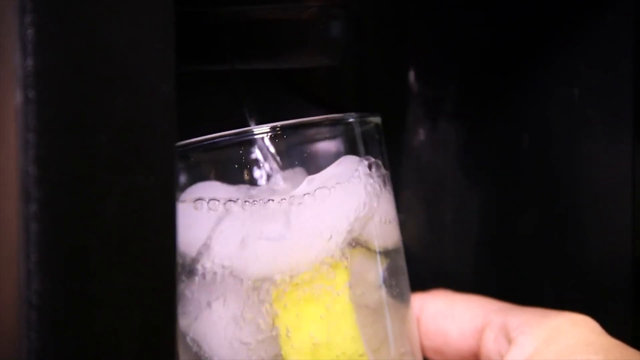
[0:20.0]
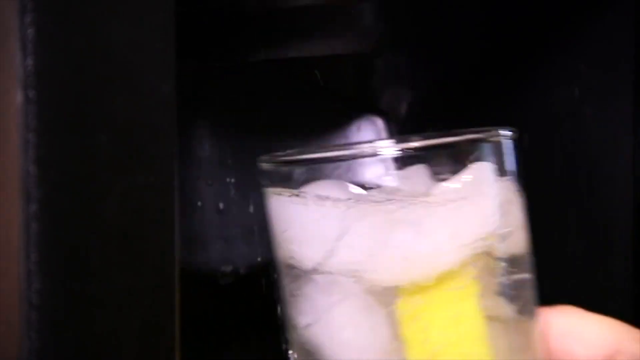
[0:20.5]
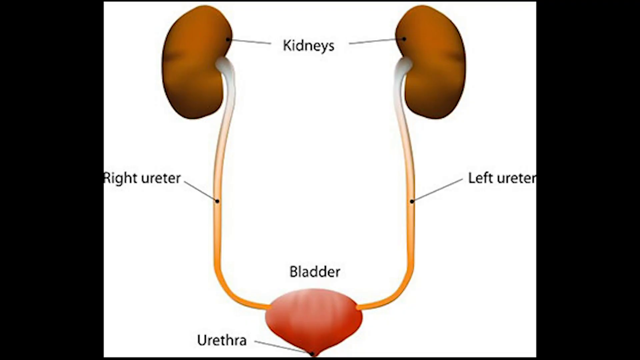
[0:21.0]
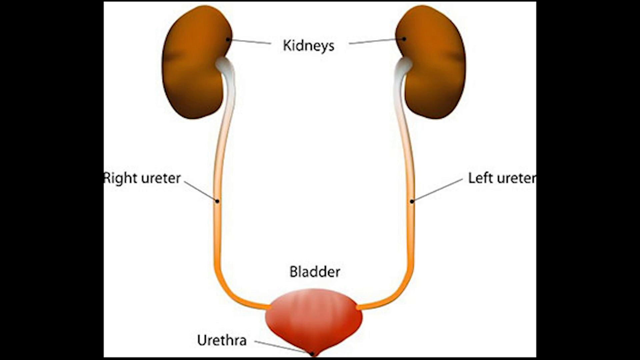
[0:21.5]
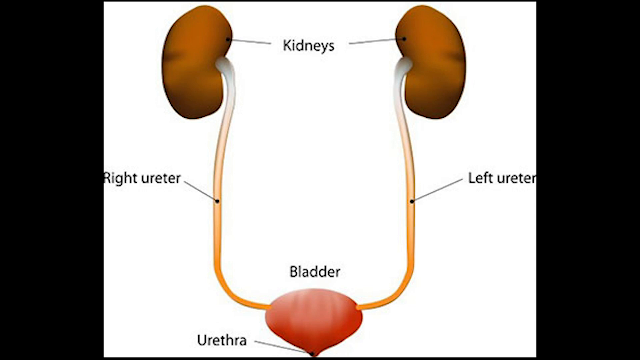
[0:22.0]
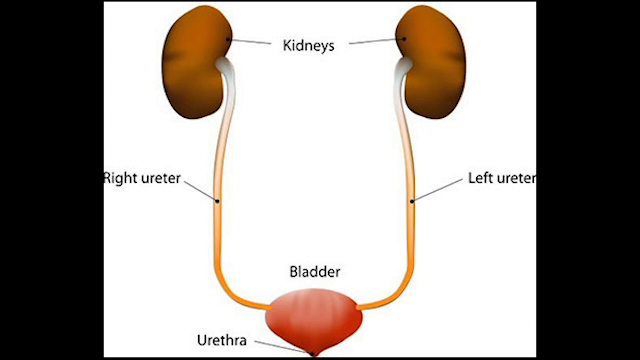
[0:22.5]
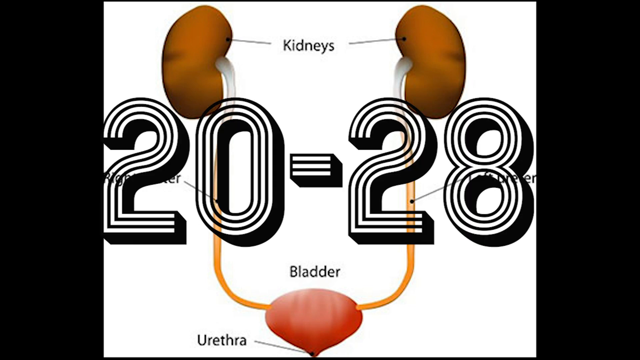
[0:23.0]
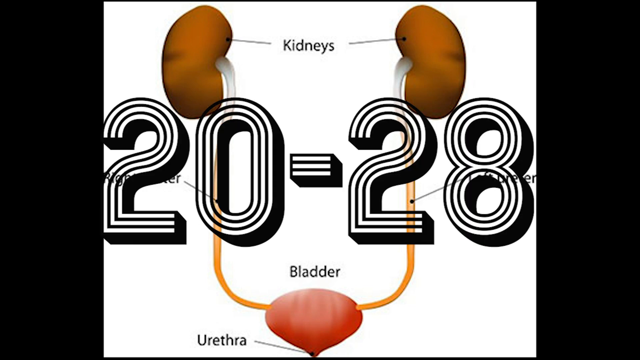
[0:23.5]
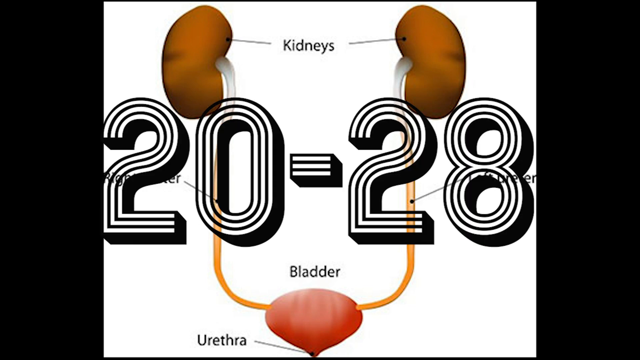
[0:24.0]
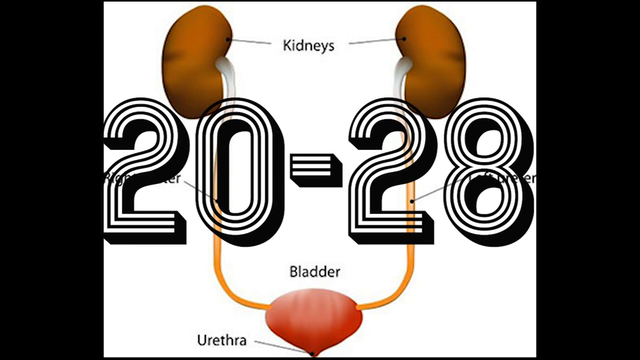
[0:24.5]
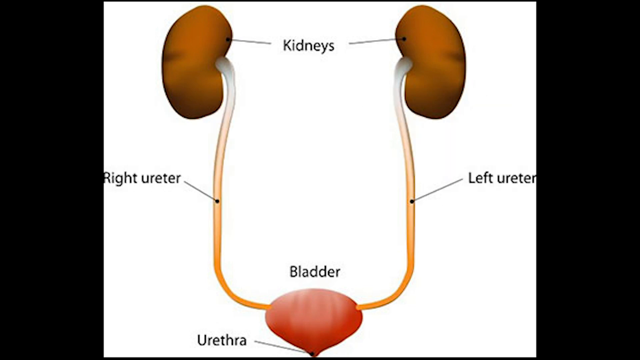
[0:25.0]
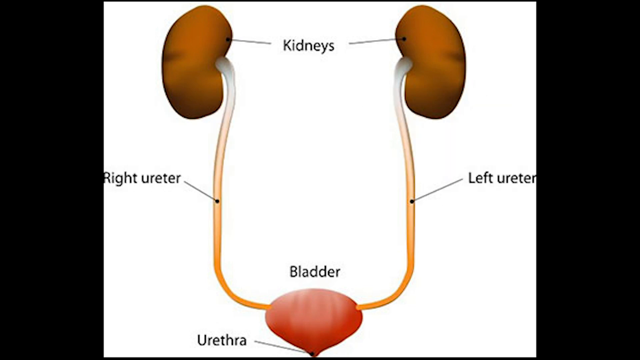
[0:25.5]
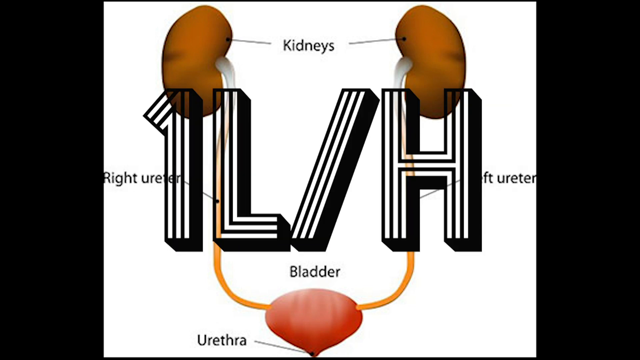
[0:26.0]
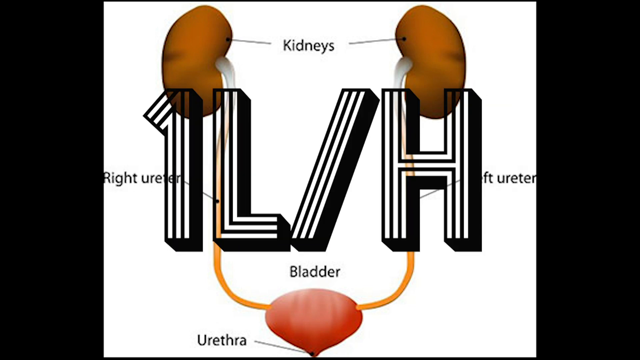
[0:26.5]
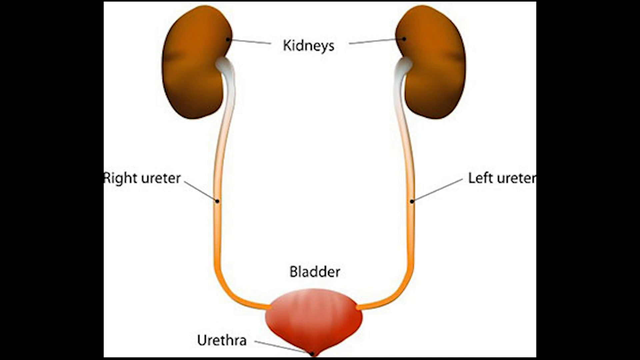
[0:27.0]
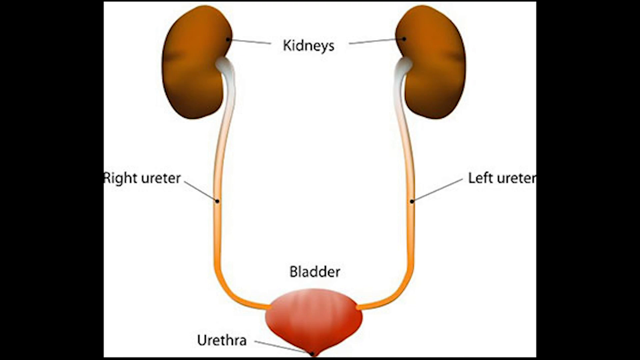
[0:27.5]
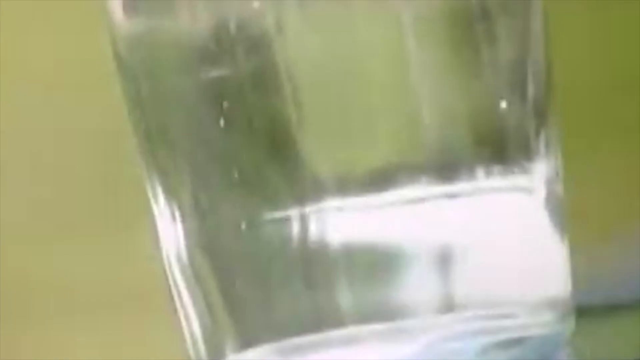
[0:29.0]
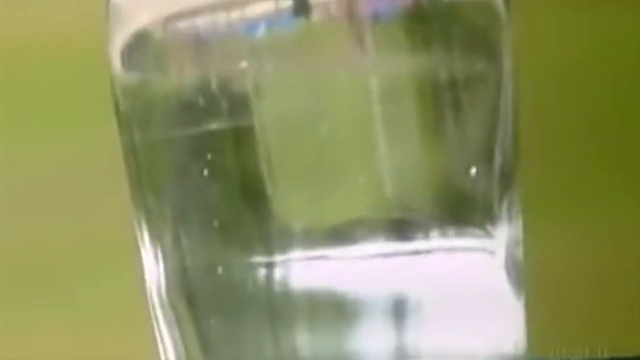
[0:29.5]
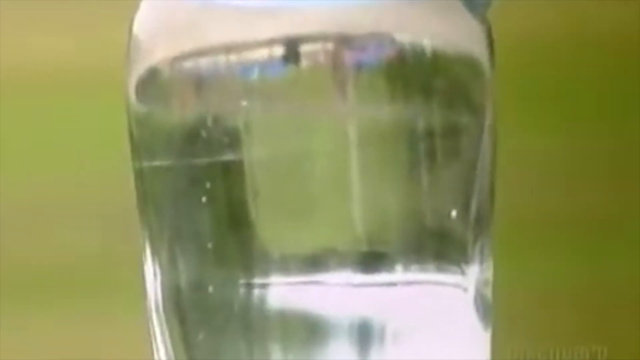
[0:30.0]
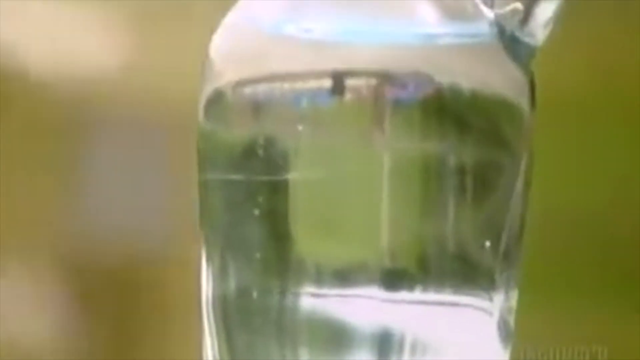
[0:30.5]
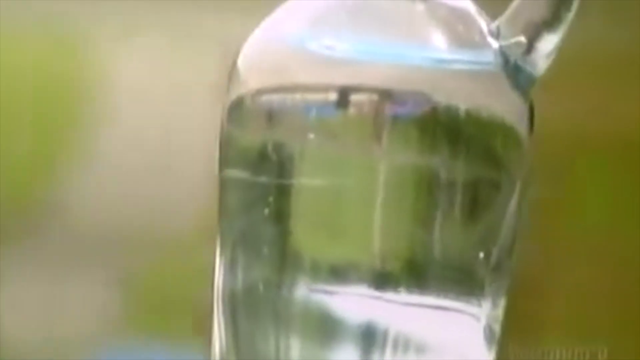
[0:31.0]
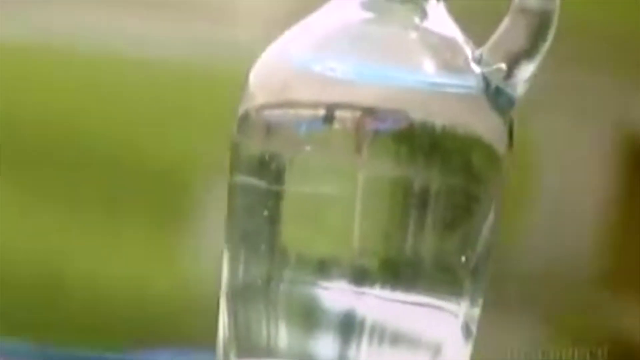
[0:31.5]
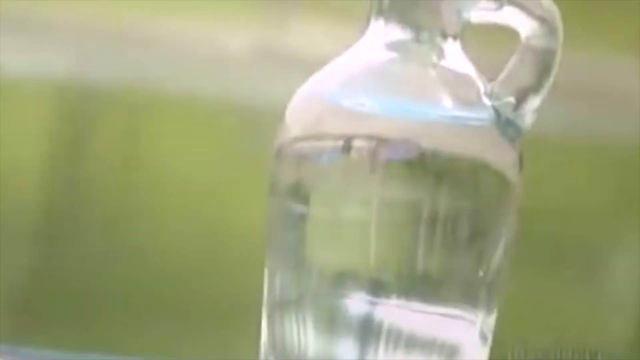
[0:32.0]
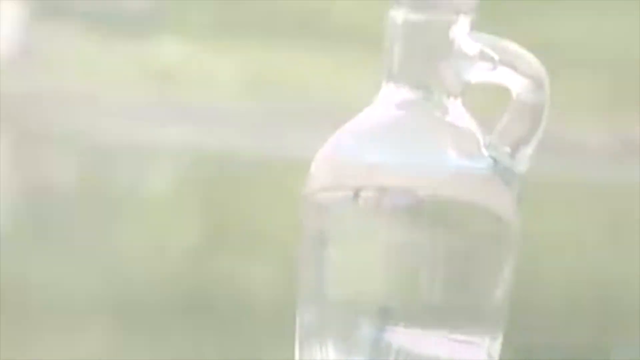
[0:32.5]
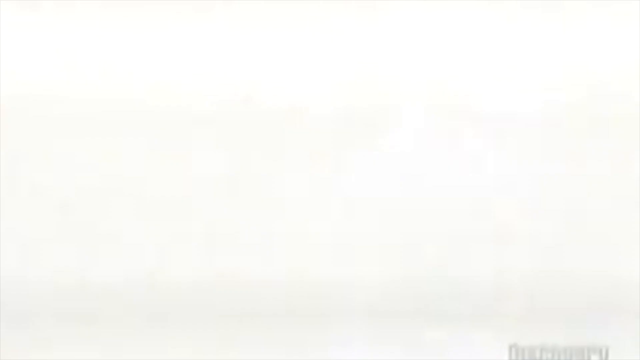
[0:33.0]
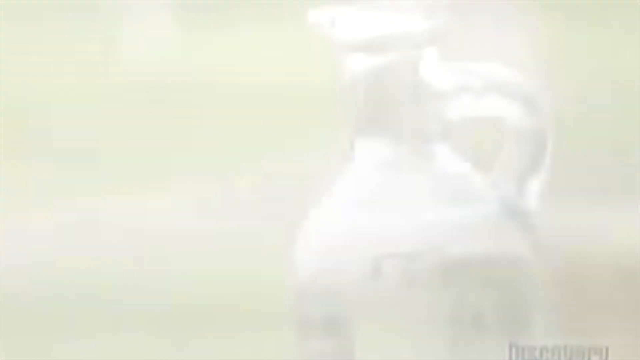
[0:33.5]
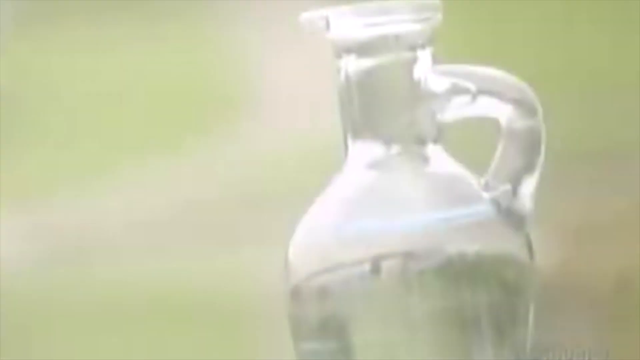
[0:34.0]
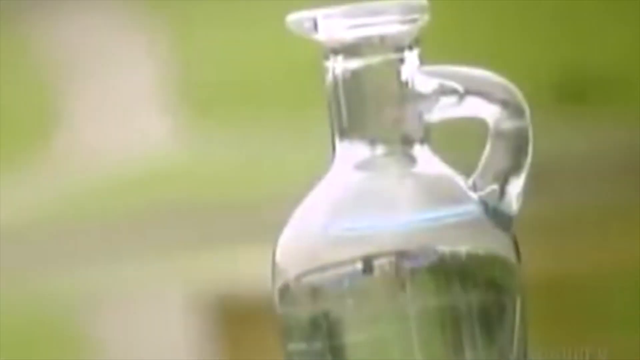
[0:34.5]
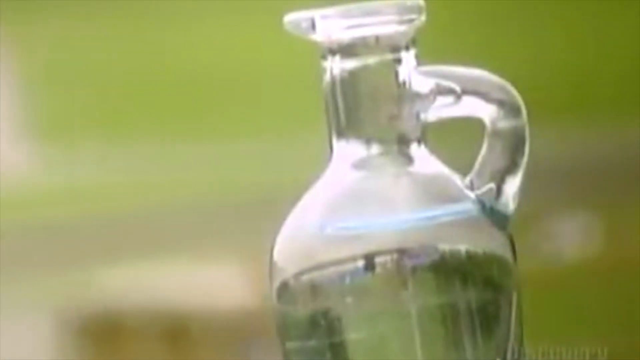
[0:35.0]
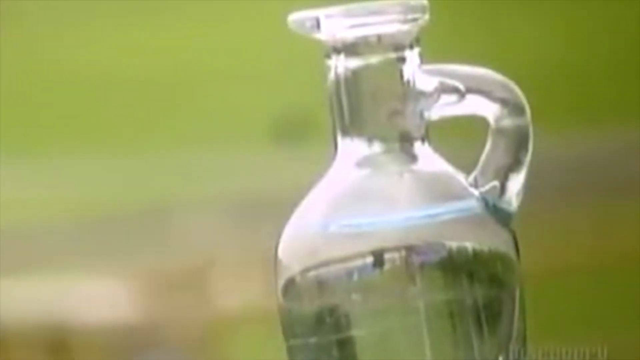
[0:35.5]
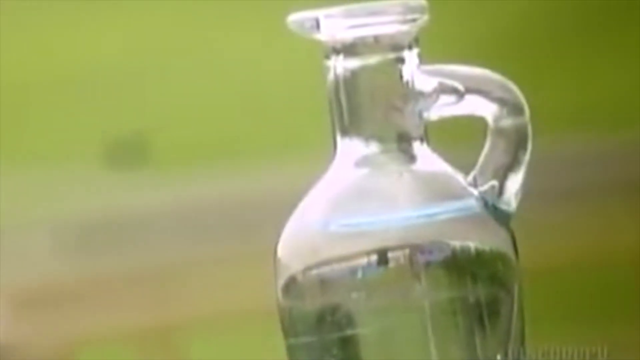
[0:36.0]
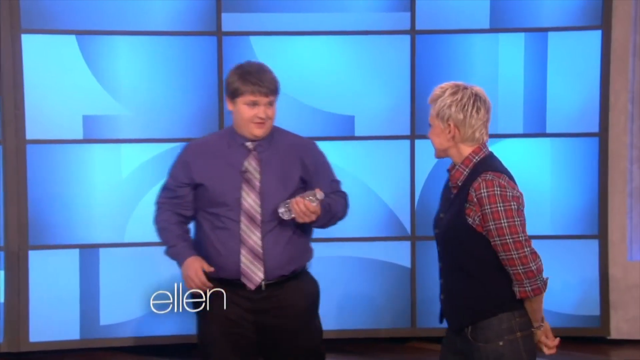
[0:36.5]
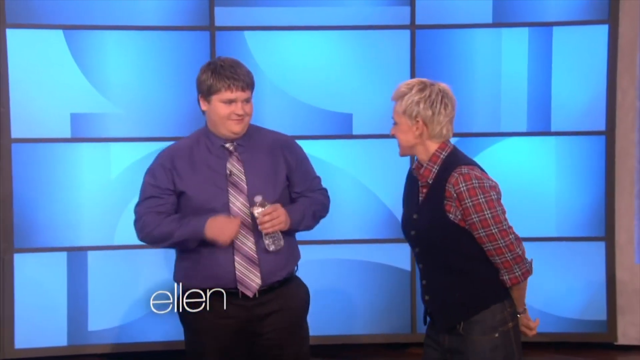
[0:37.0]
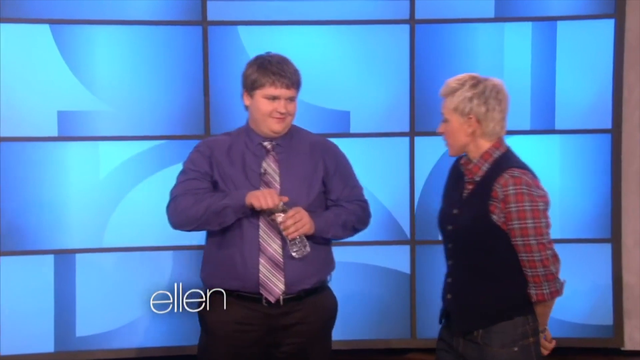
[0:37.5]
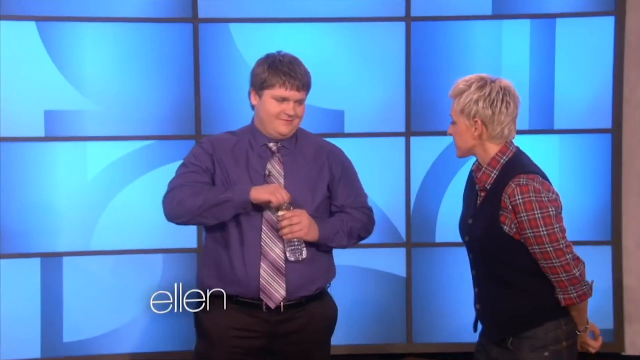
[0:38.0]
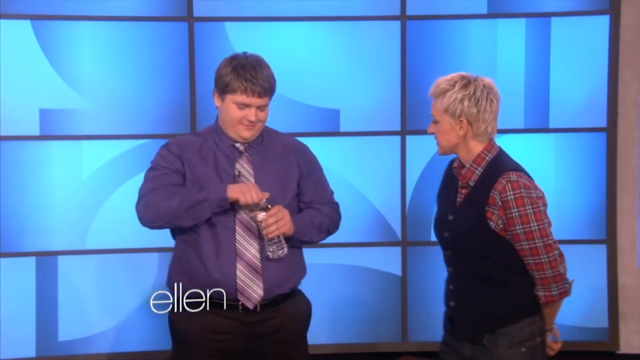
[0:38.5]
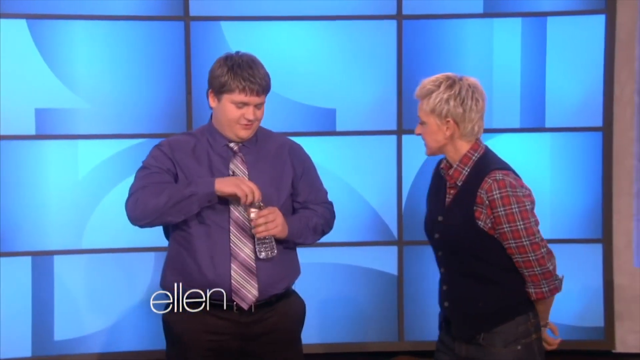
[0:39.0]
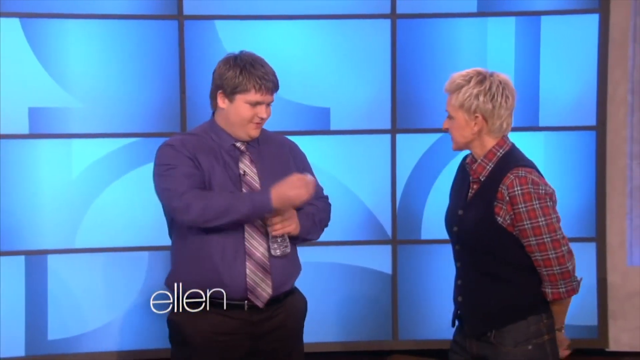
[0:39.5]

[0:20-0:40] Someone holds a glass cup filled with ice and a single lemon wedge up to a fridge door, which fills the cup with a jet of water. Once the water is about half an inch from the top, the cup is pulled away. The video cuts to a 3D render of someone's organs on a white background, with multiple labels pointing out the parts shown: "kidneys," "right ureter," "left ureter," and "bladder." Text appears on top that reads "20-28," then disappears, and new text appears reading "1L-H." The video cuts to a large bottle with a small spout handle on its neck, filled with water. The screen flashes white and then gives a clearer view of this vase of water. Next, two people are in a studio, with multiple flat-screen TVs showing a blue background behind them. The man on the left holds a water bottle in his left hand and uses his right hand to turn the cap off. The person on the right is the talk show host Ellen, of the TV show Ellen, who looks at the person opening the bottle and reaches out with the right hand to take the cap.